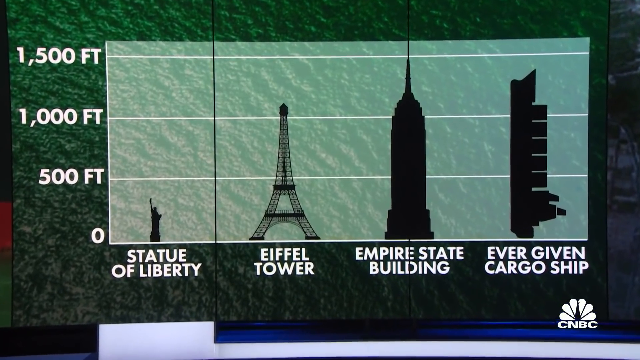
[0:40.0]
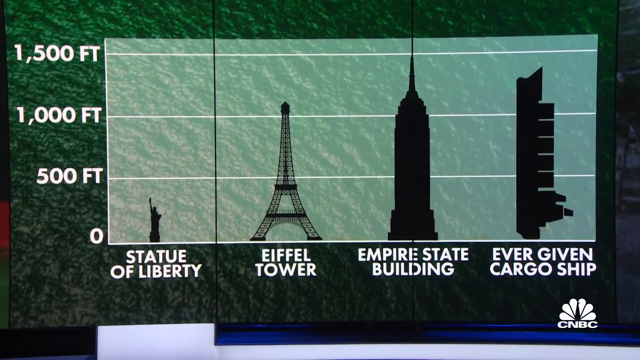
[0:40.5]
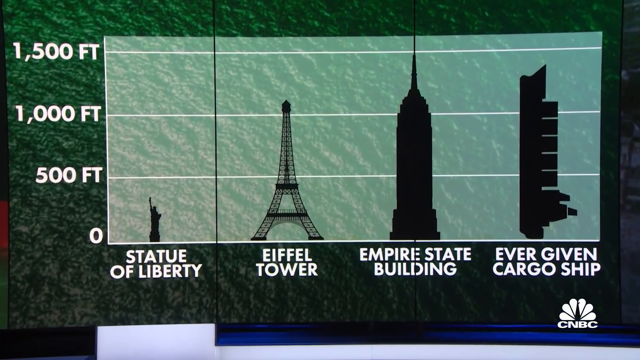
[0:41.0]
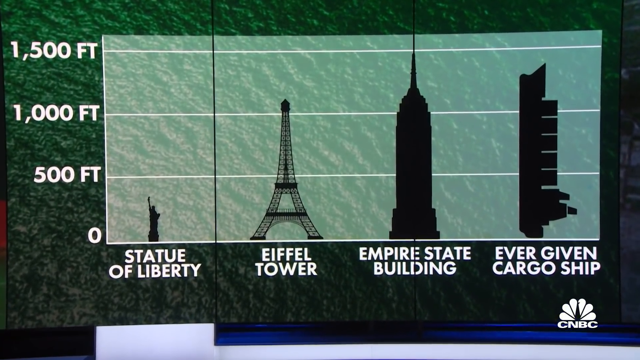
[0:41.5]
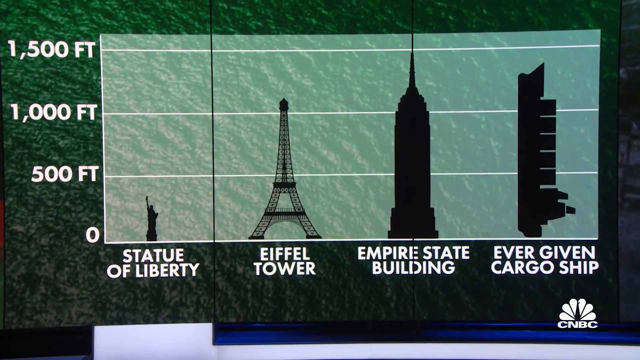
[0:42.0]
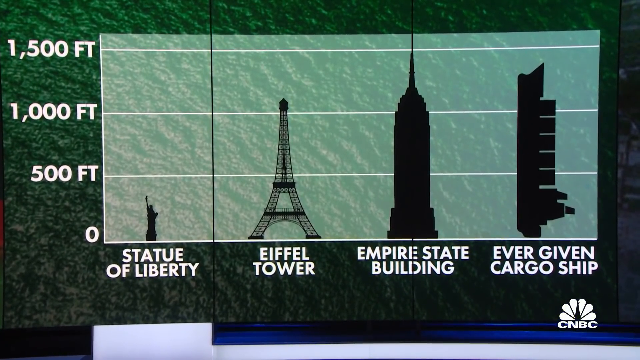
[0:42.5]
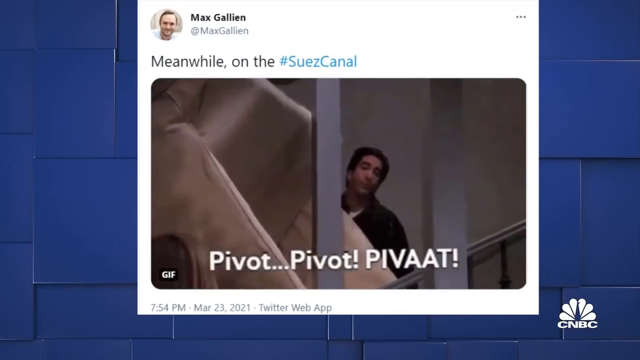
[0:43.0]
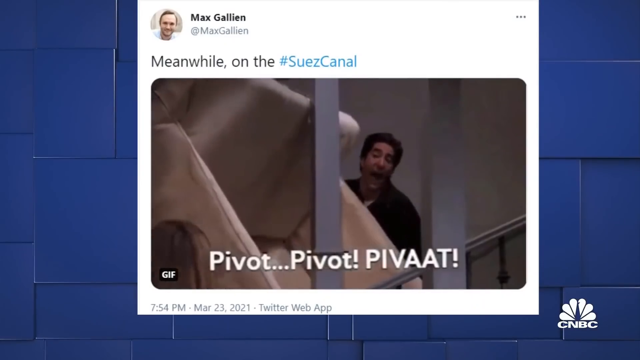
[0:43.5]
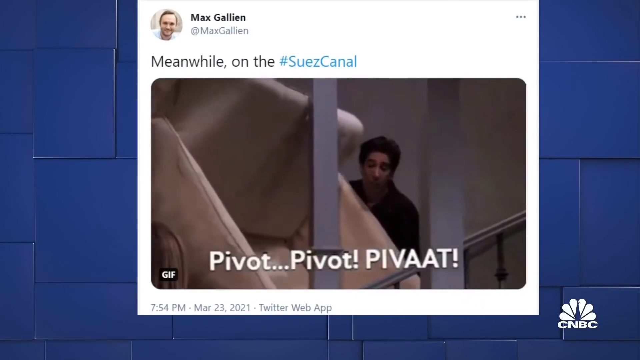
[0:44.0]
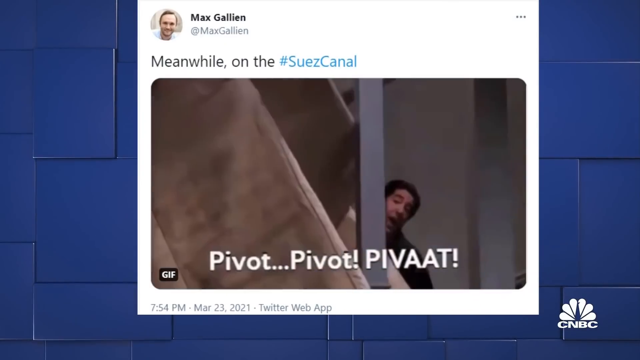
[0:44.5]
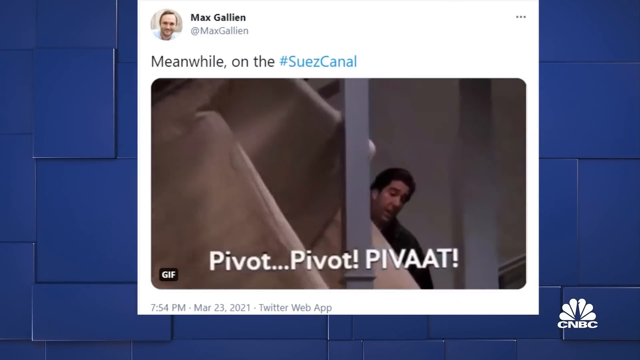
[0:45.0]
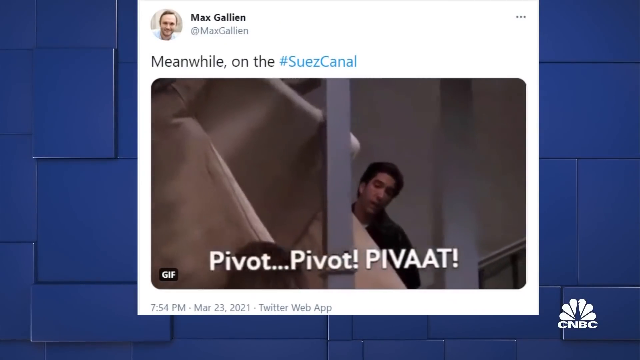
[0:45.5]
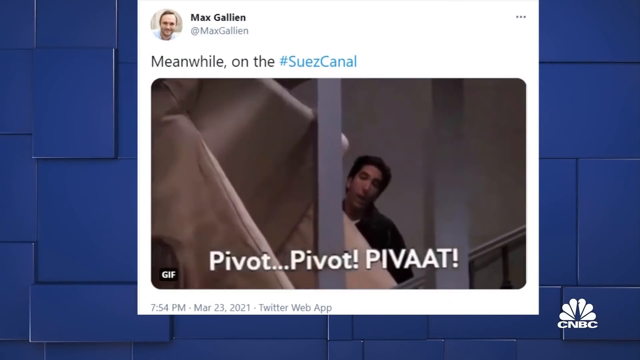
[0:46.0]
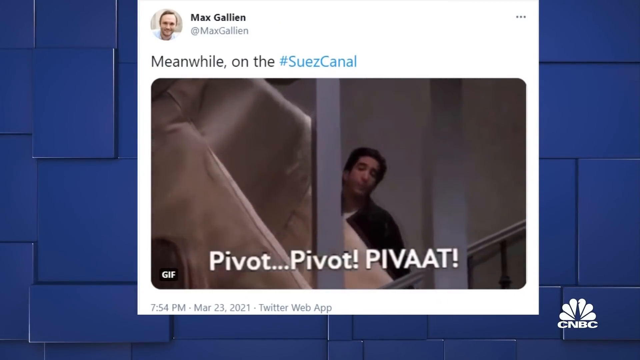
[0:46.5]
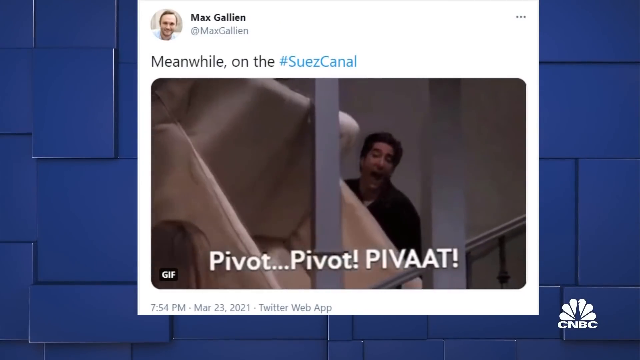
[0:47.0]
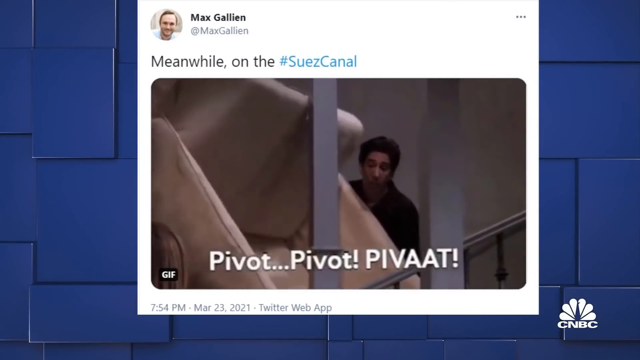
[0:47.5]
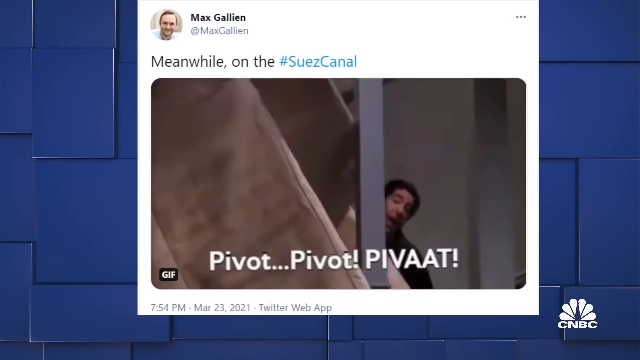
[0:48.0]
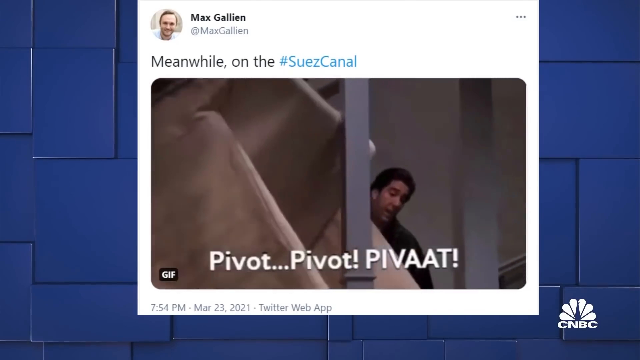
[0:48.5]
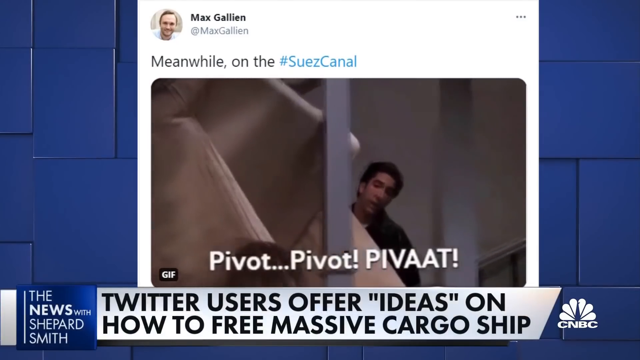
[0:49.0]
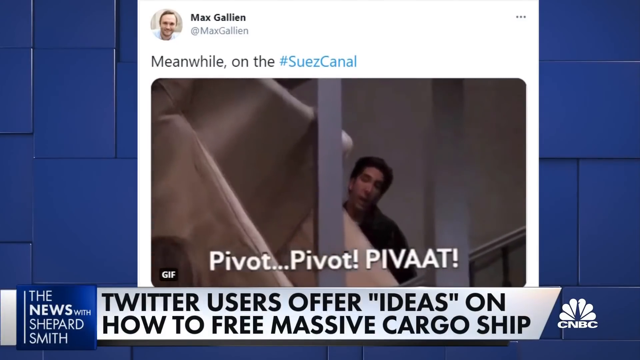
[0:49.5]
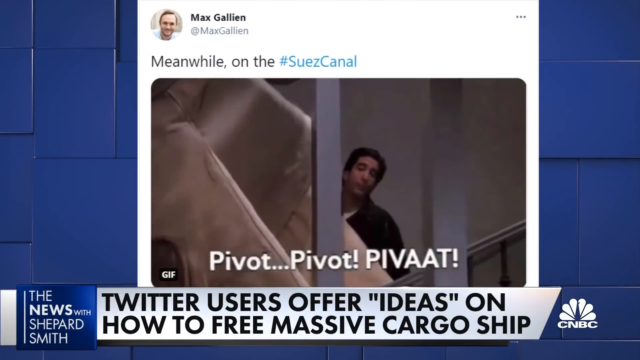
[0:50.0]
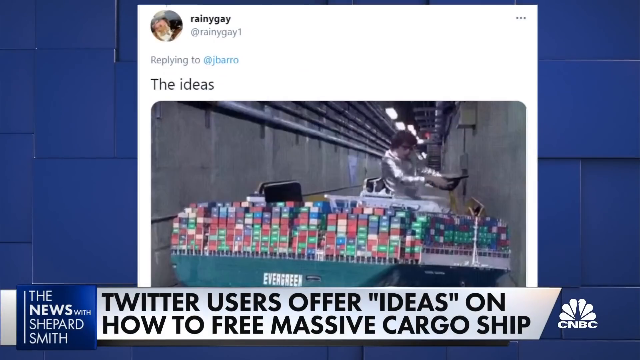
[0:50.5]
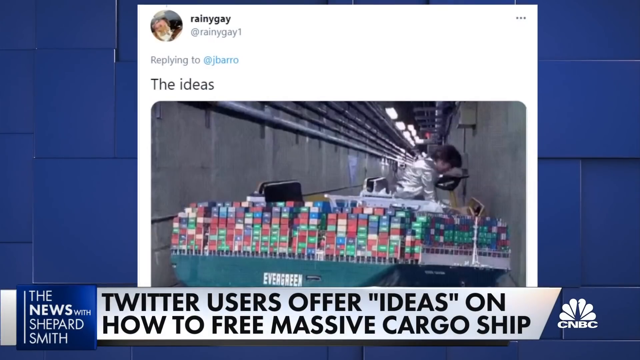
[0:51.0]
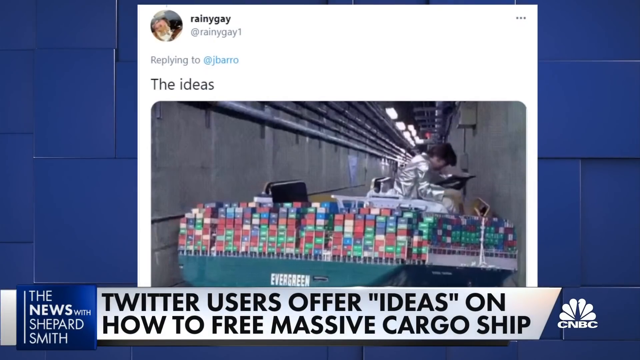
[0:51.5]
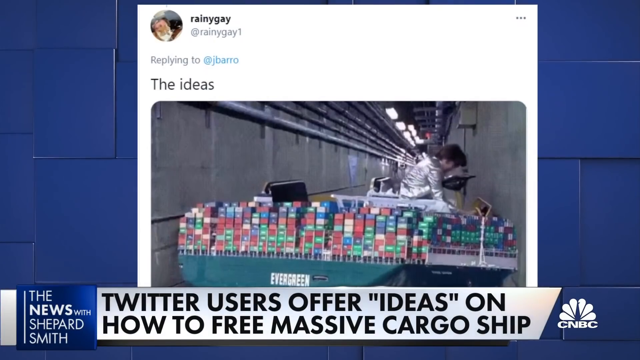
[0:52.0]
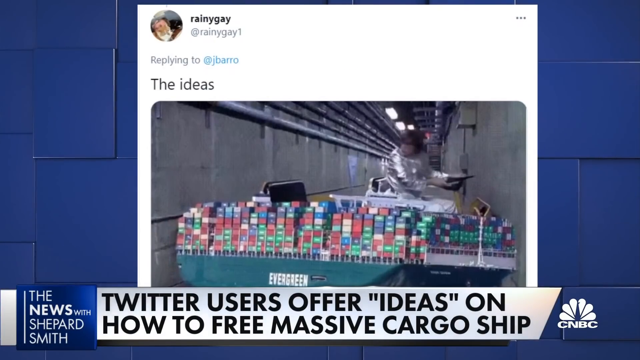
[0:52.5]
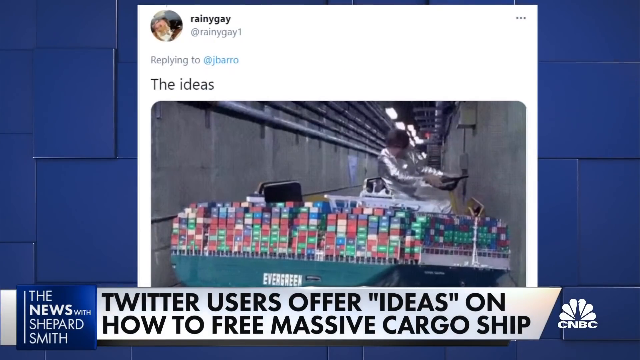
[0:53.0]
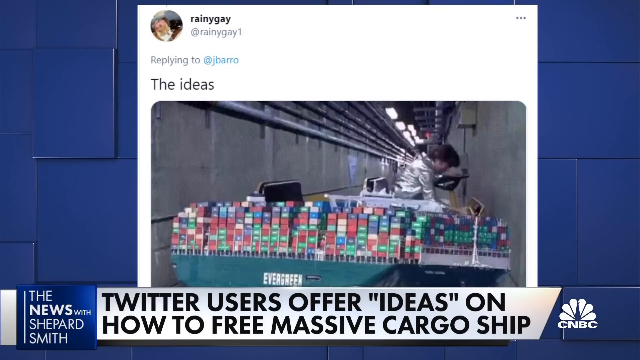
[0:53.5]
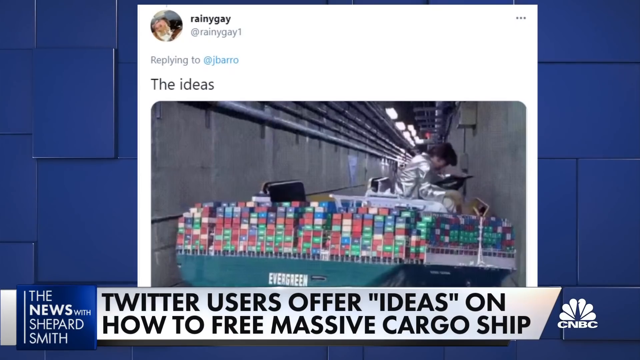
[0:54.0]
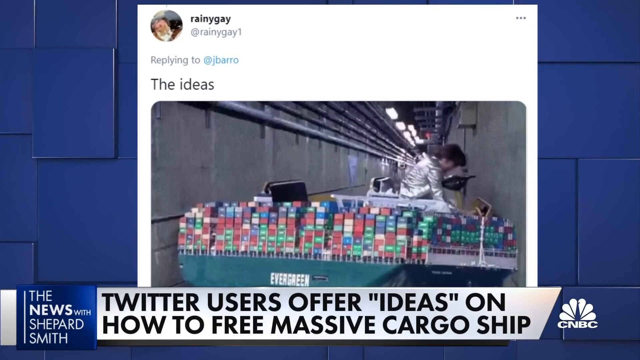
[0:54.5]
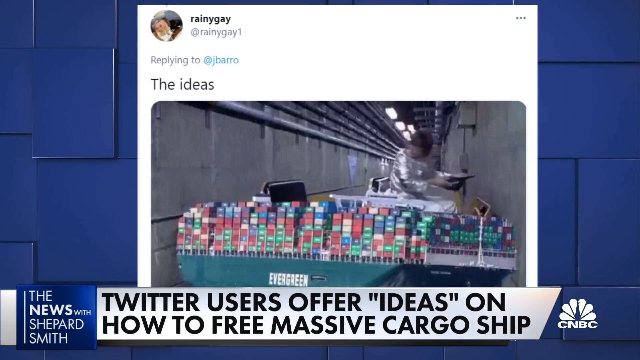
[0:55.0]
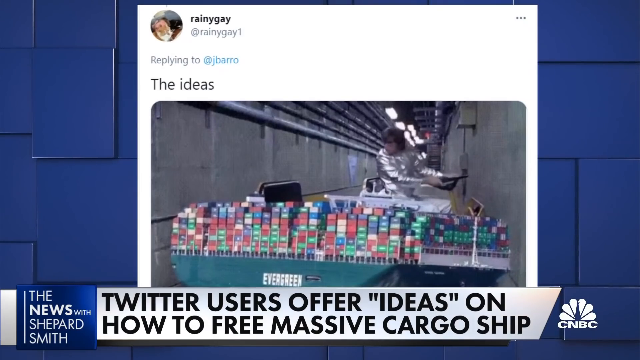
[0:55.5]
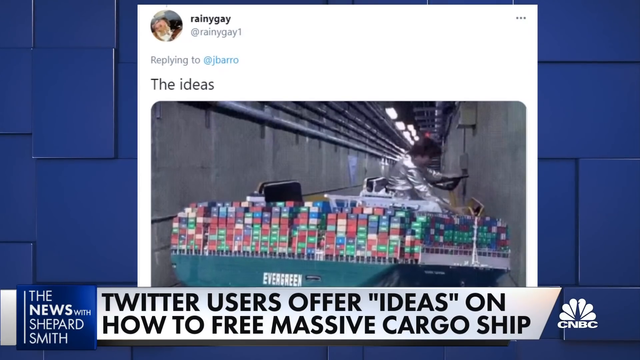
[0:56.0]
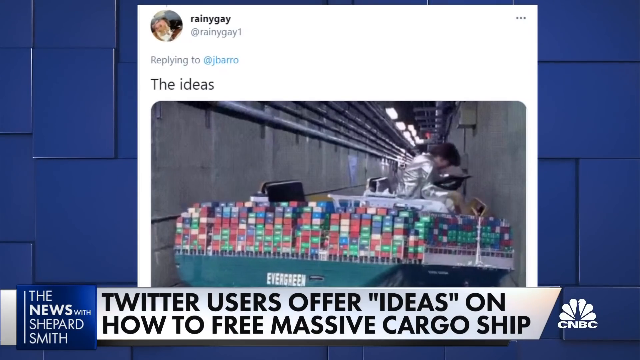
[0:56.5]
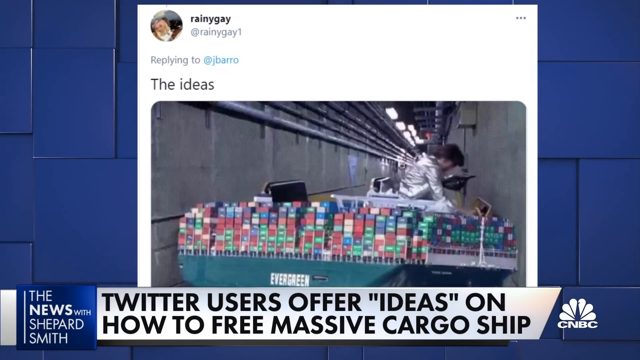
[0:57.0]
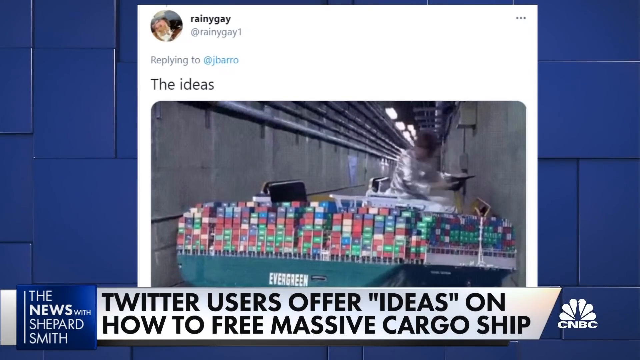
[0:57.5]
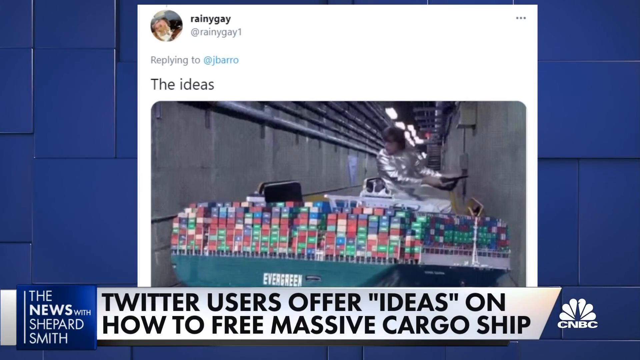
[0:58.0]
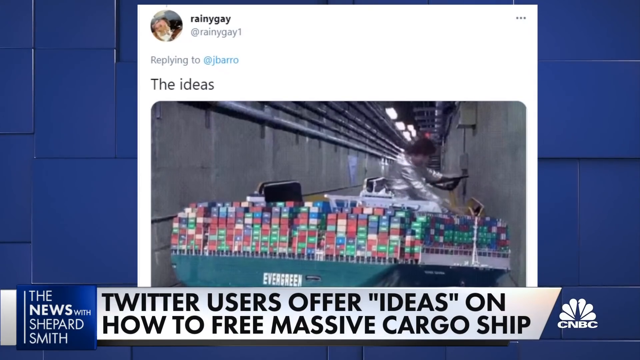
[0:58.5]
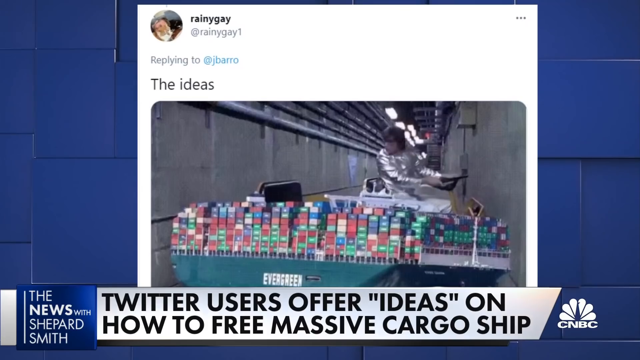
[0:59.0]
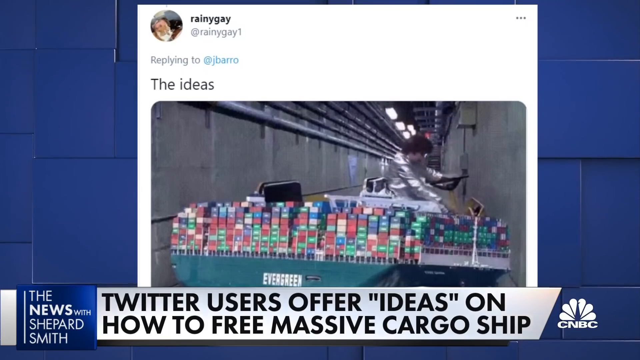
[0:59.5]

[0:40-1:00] The height comparison of the four objects stays on screen, with the white CNBC logo in the bottom right corner. The video then cuts to what seem to be memes taken from Twitter. One reads "meanwhile on the Suez Canal" and shows "pivot pivot pivot" with a screenshot from the TV show Friends in which characters try to drag a couch upstairs. At the bottom, "the news with Shepard" appears along with black text on a white background reading "Twitter users offer ideas on how to free massive cargo ship". Next comes a screenshot from one of the Austin Powers movies in which he gets a cart stuck sideways, with a Photoshop of the cargo ship placed over the golf cart, backing up back and forth.